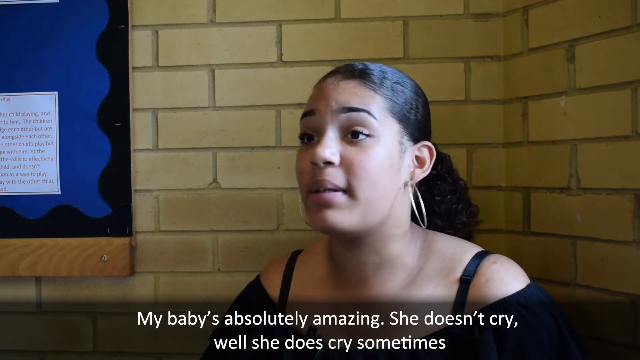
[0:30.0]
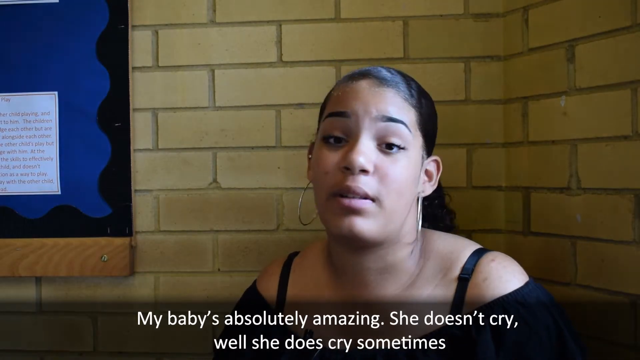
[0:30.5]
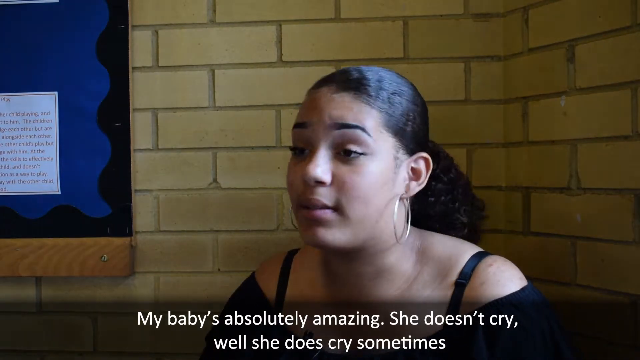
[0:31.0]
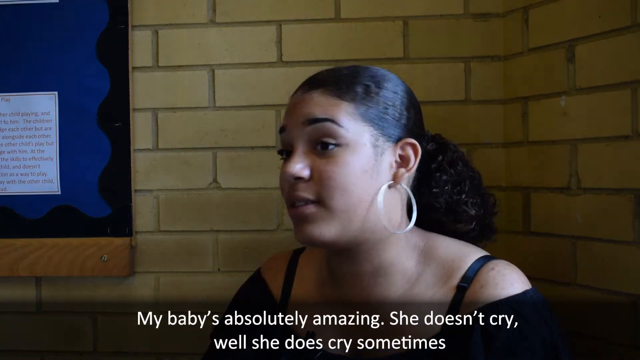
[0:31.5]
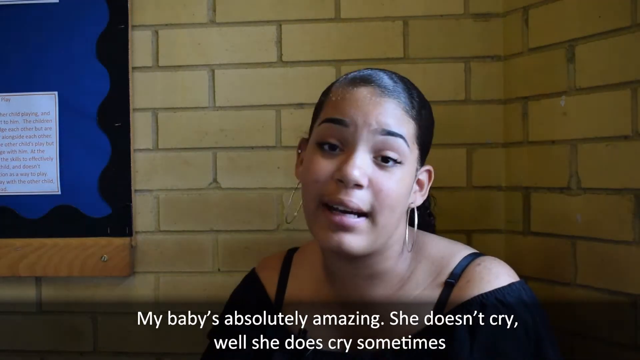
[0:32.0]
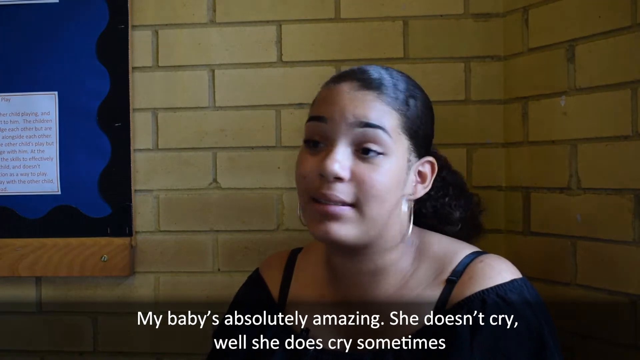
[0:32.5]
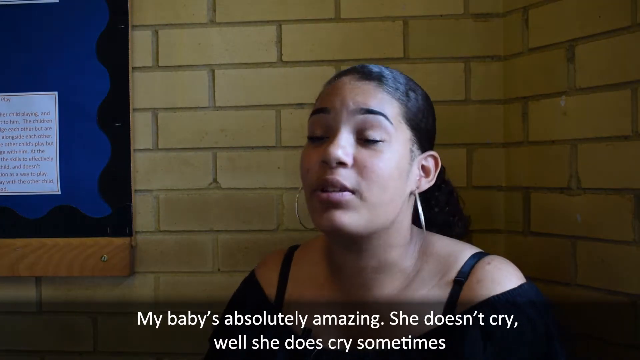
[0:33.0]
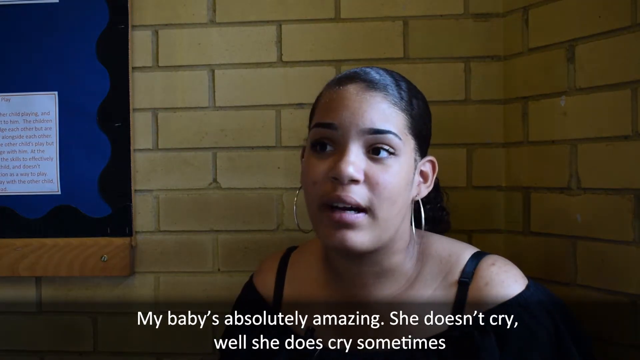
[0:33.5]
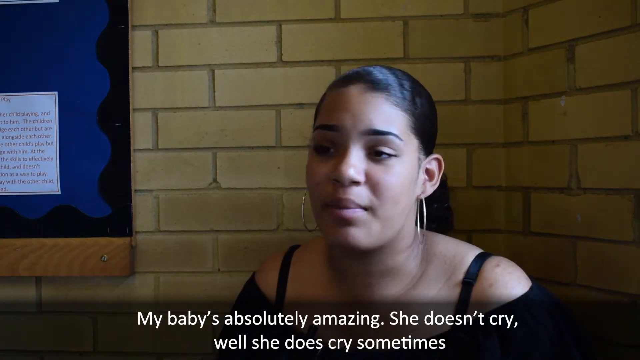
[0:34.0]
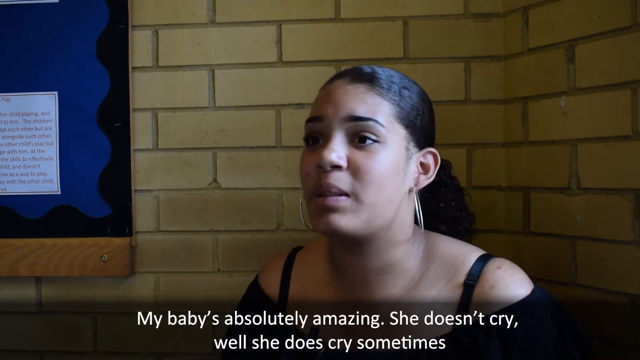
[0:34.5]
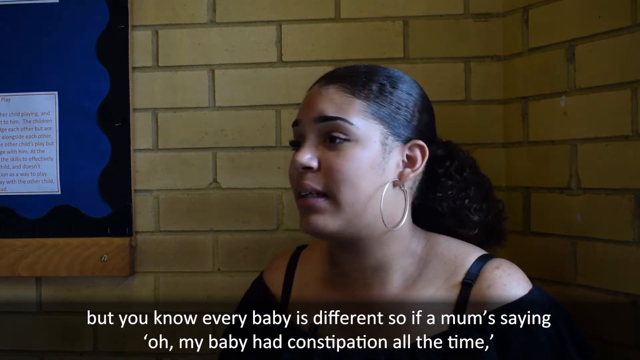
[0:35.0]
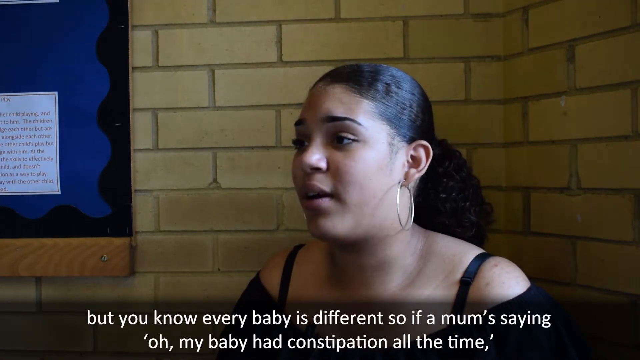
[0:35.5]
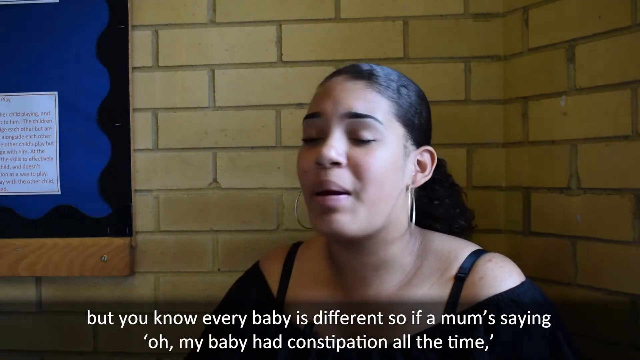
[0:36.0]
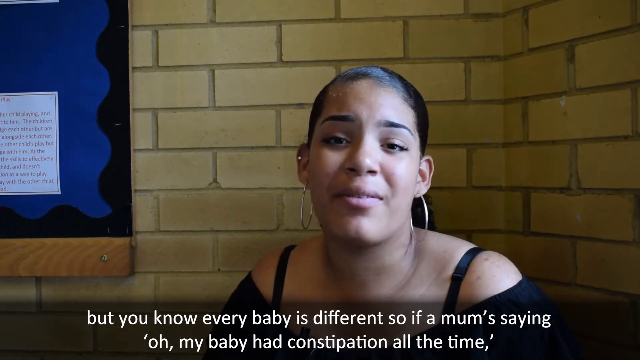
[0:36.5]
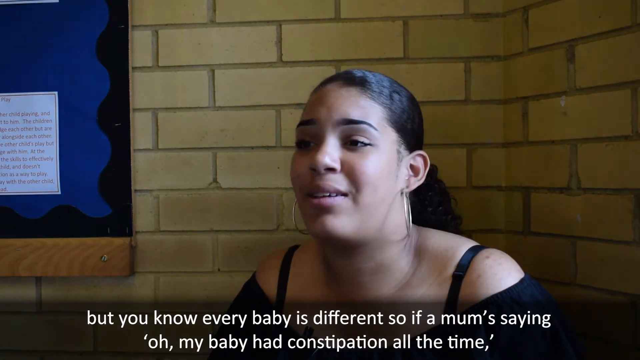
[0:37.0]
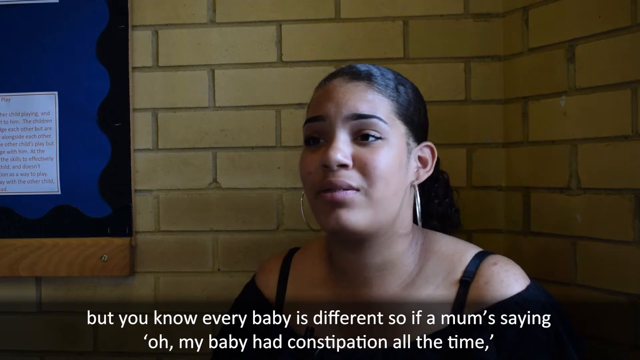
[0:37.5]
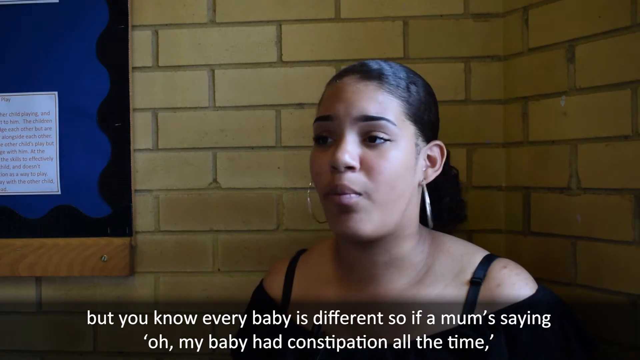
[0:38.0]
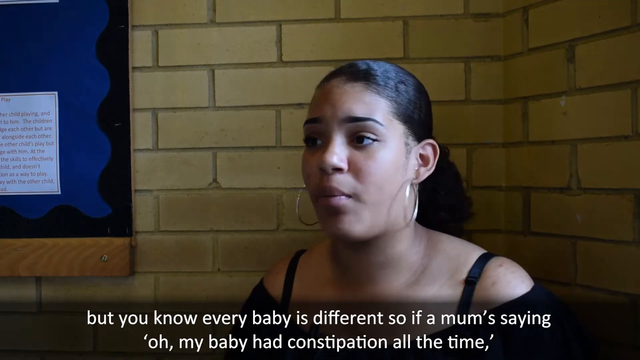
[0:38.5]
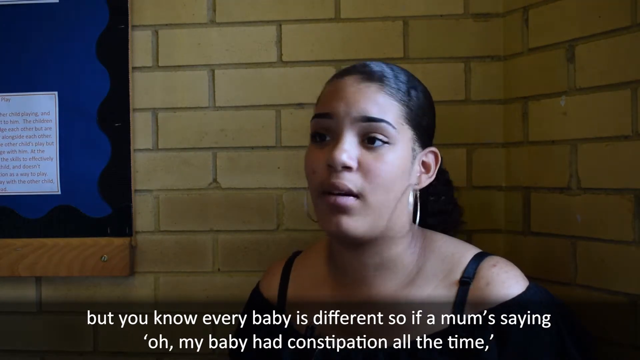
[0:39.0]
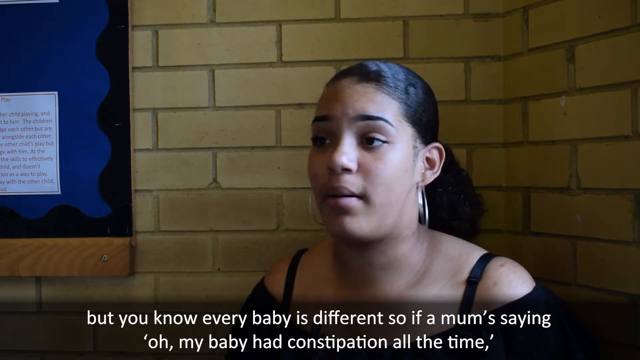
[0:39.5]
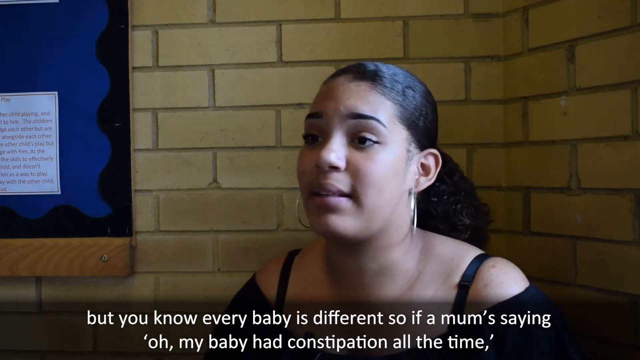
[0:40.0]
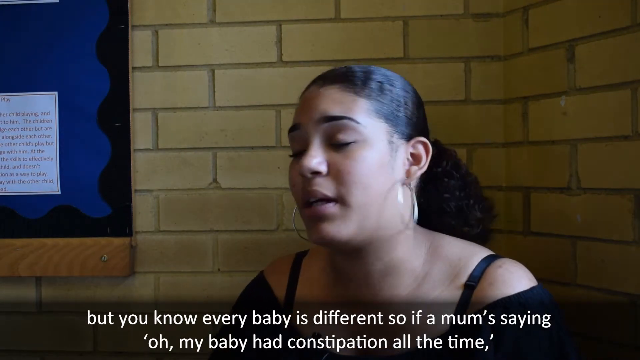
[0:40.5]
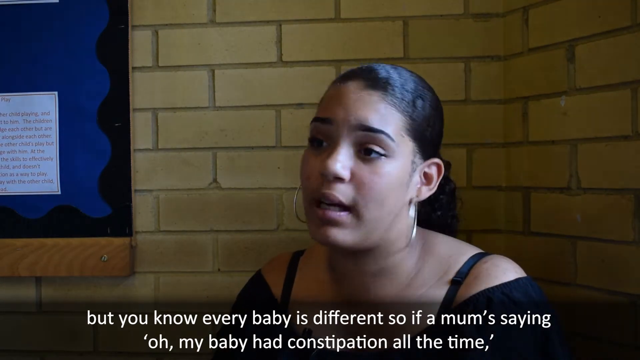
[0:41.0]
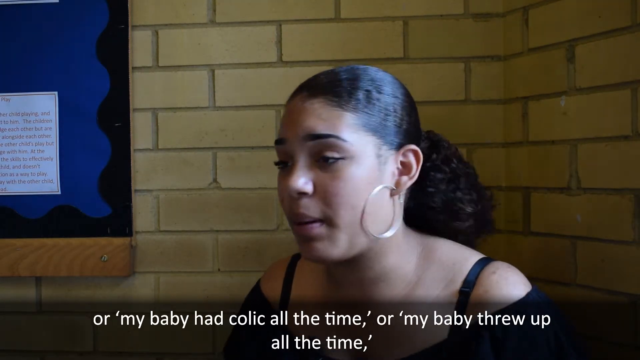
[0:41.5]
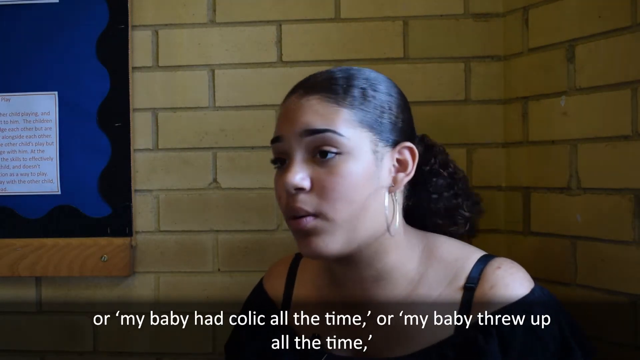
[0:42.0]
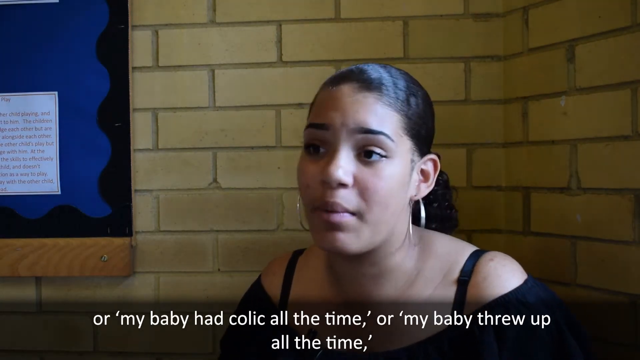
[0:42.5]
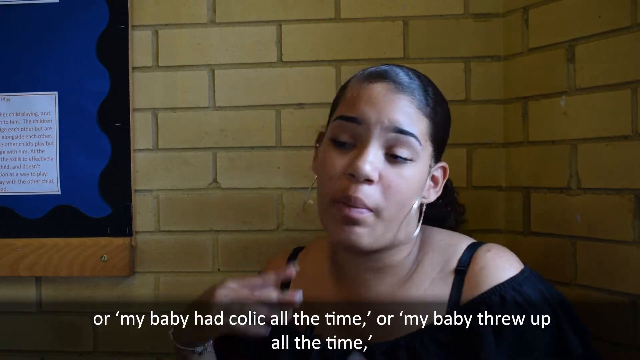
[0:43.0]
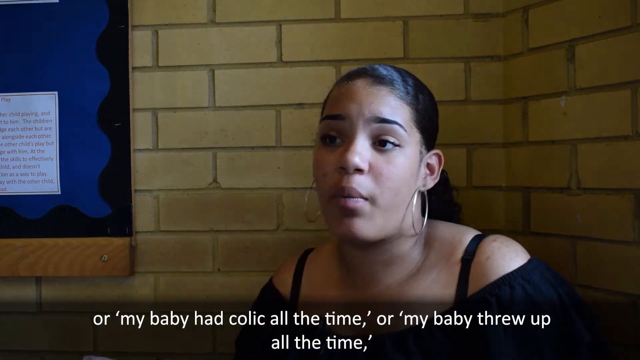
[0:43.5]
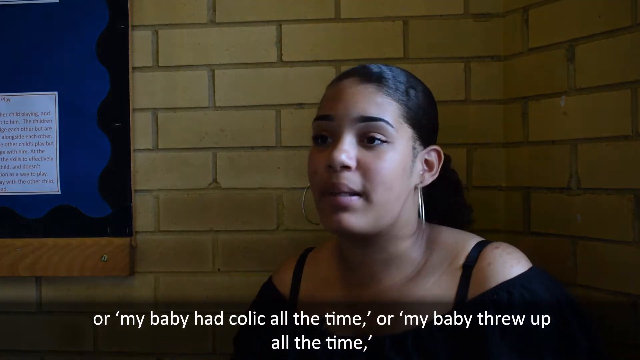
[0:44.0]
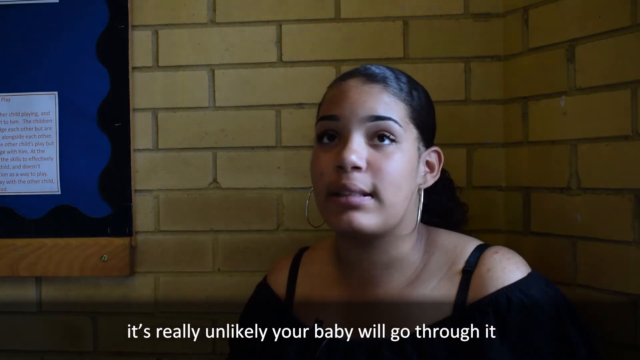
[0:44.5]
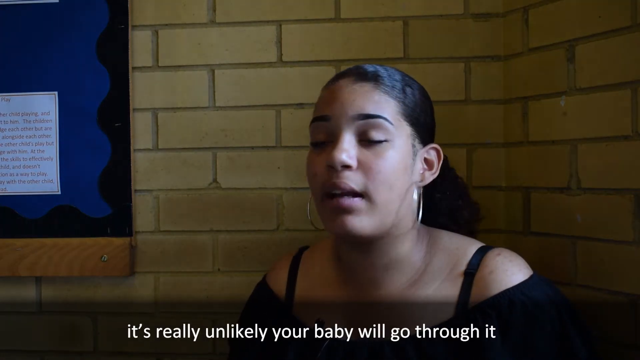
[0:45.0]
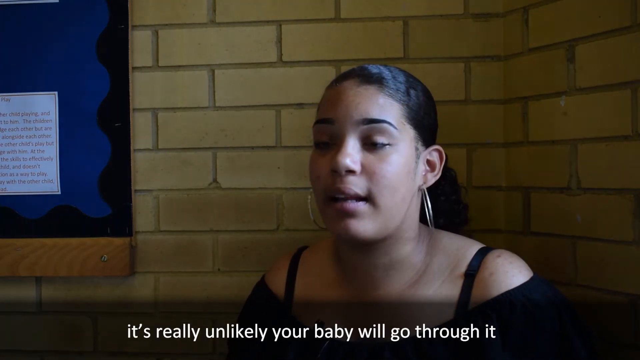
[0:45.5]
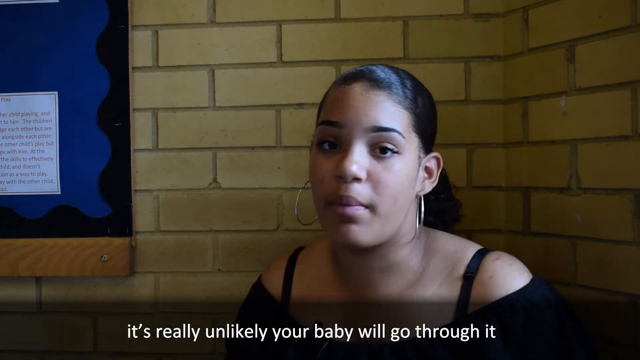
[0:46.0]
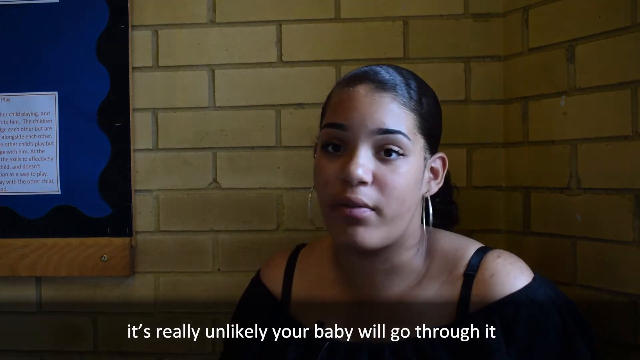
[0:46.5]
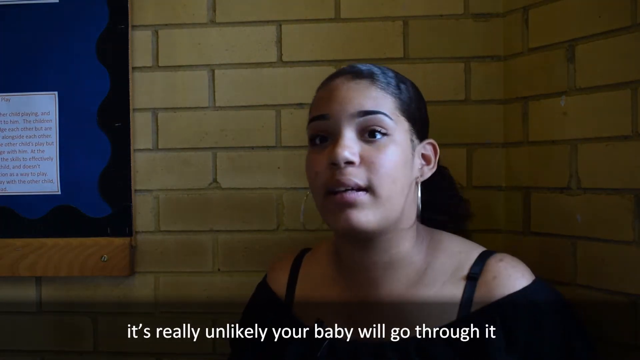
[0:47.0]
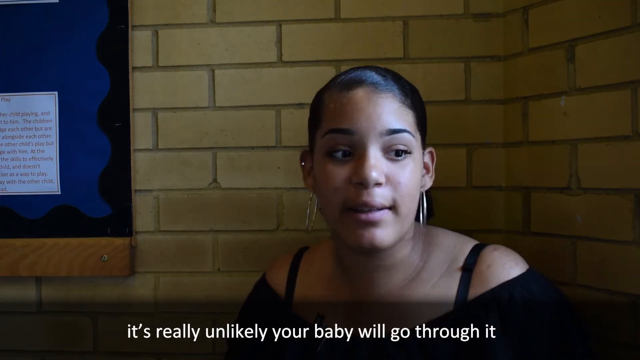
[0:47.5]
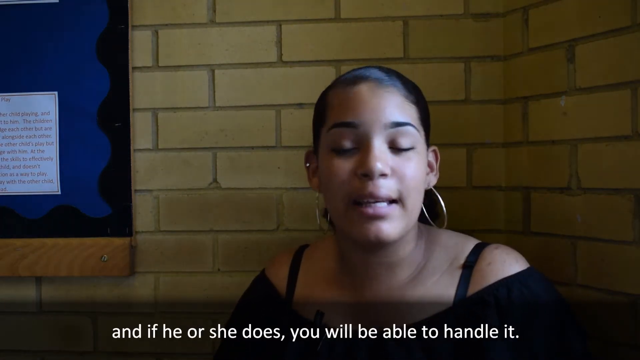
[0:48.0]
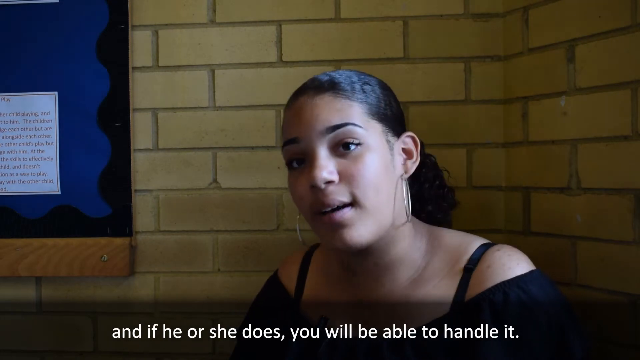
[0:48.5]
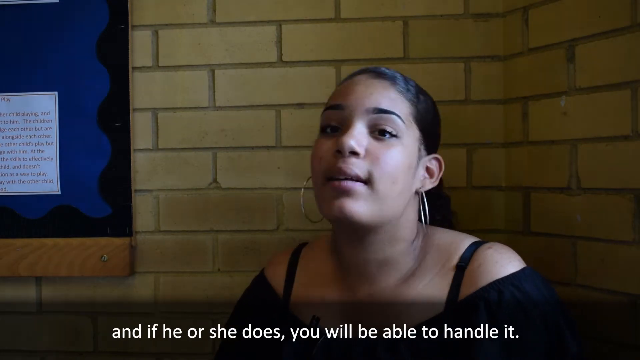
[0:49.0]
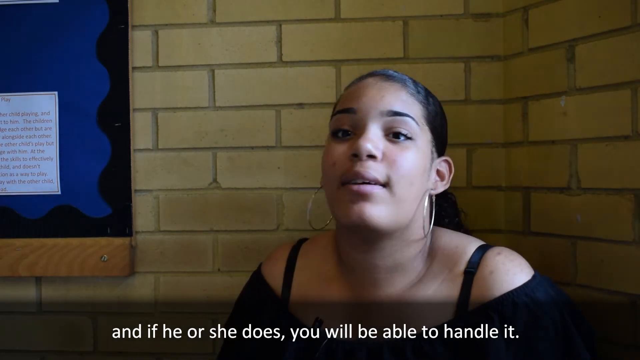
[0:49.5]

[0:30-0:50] She continues speaking to the camera, shaking her head. The brightness shifts from dark to light, altering its shade slightly. She waves her right hand in a dismissing manner while shaking her head and speaking to the camera. Her head moves constantly, and she seems to be speaking in a very dismissive manner, shaking her head as if she pays no attention to what other people say. She keeps looking toward the left-hand side of the screen with her face angled slightly, avoiding direct eye contact with the camera, which suggests that someone is likely sitting to the left of and behind the camera whom she is looking at.